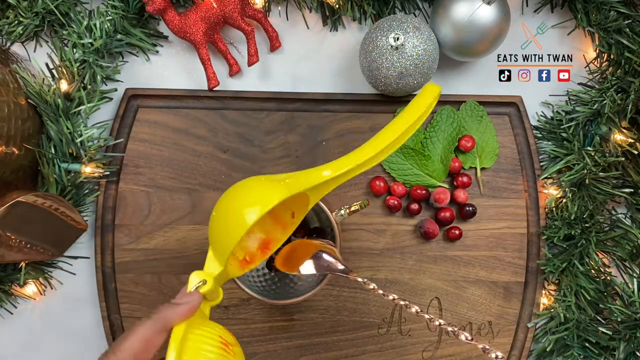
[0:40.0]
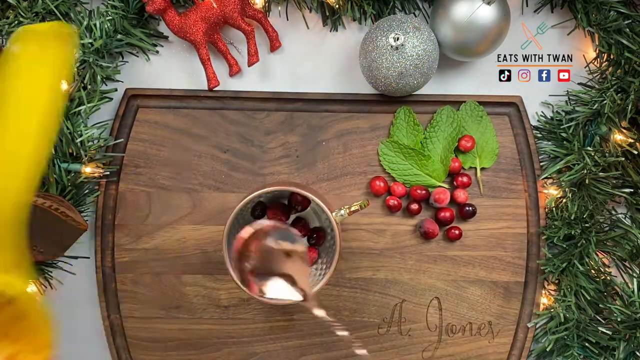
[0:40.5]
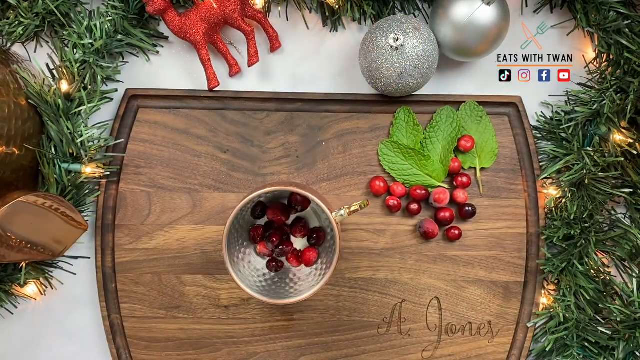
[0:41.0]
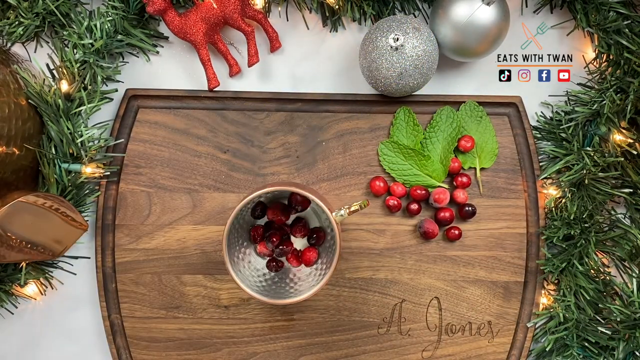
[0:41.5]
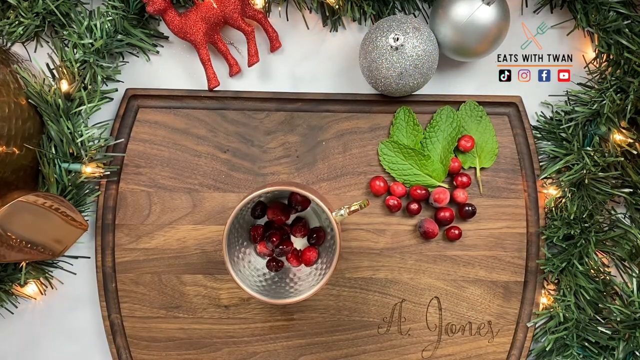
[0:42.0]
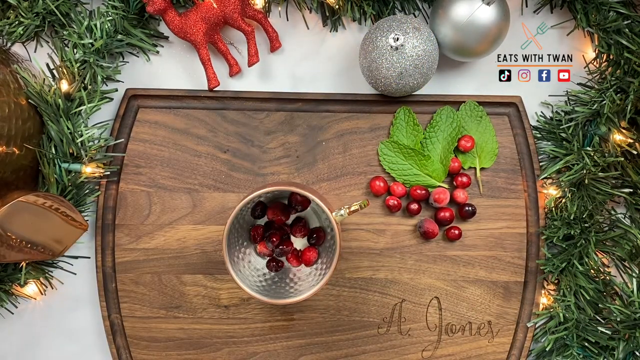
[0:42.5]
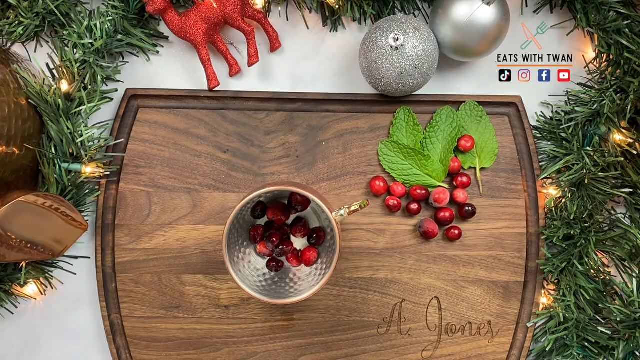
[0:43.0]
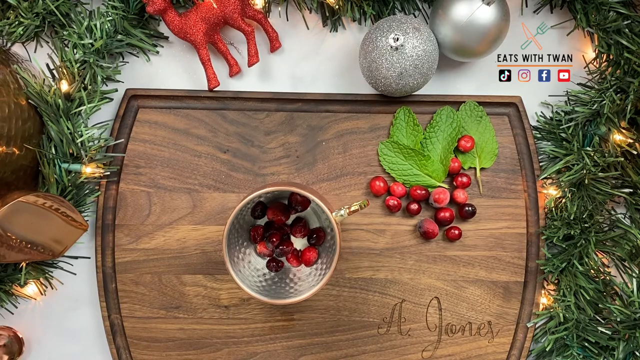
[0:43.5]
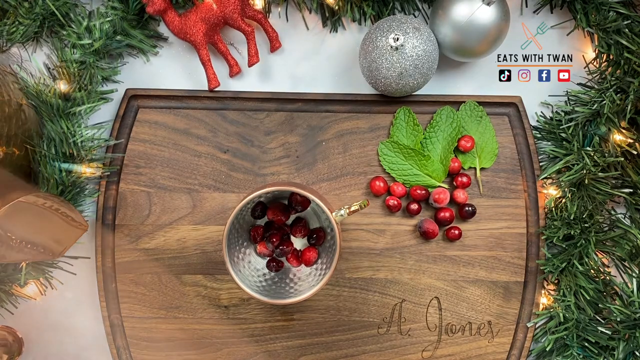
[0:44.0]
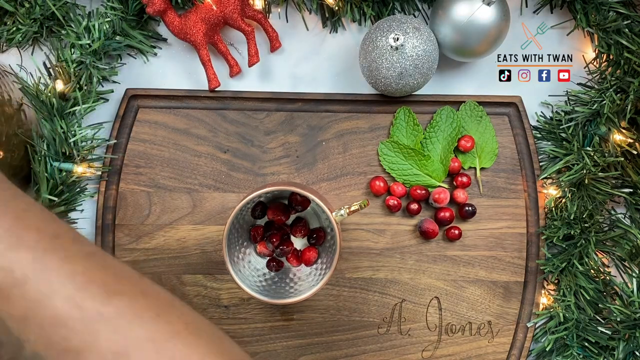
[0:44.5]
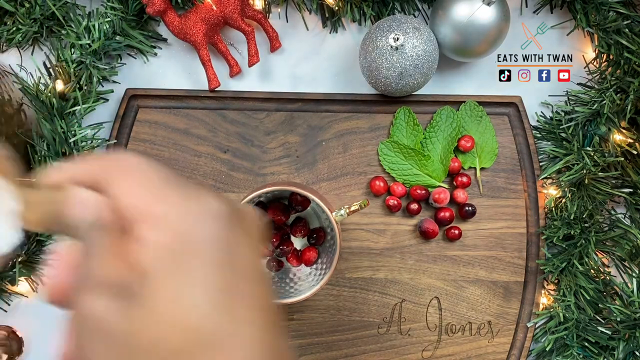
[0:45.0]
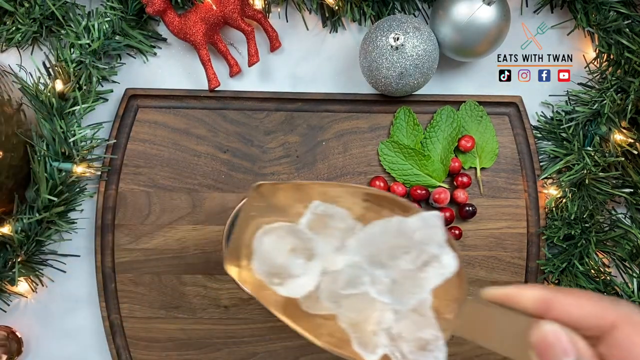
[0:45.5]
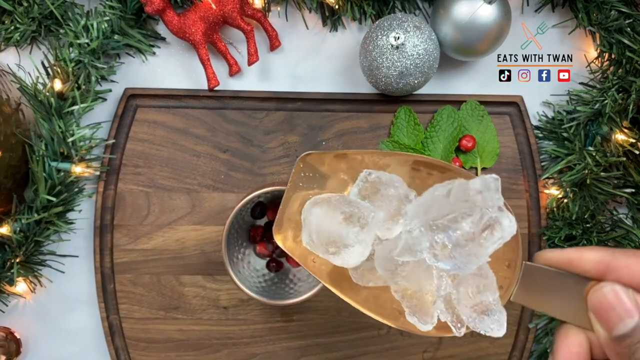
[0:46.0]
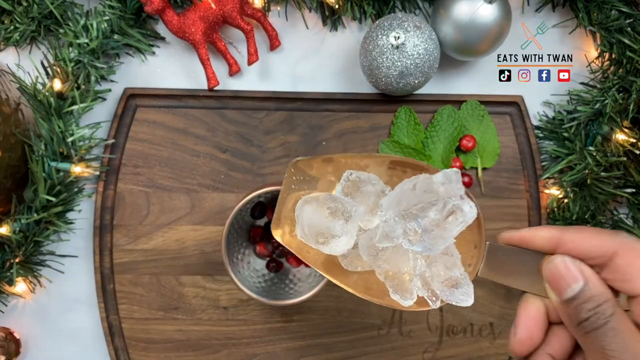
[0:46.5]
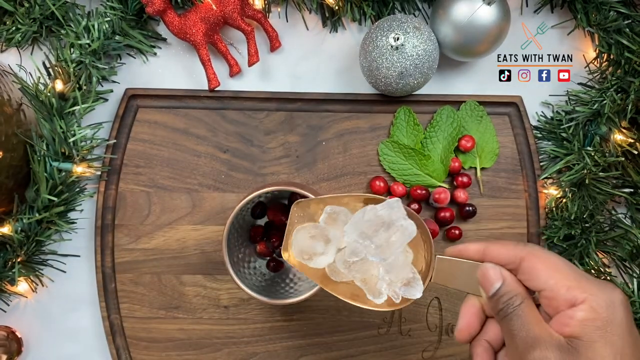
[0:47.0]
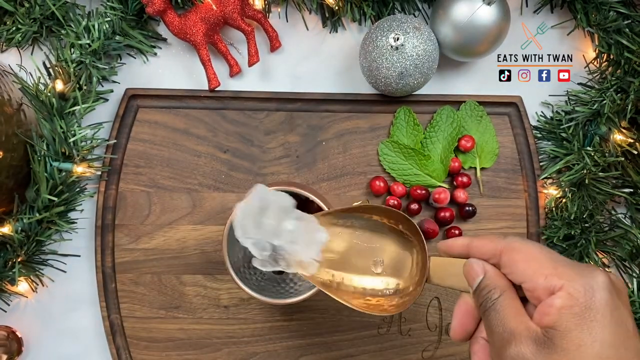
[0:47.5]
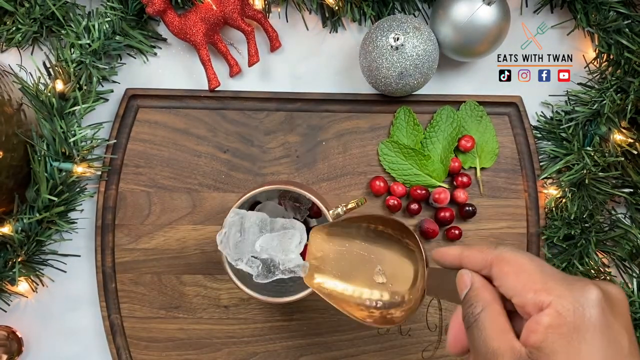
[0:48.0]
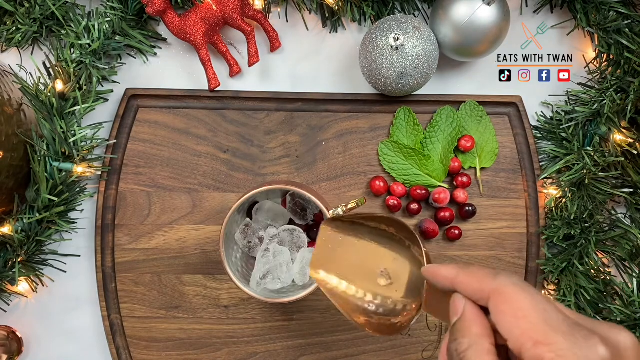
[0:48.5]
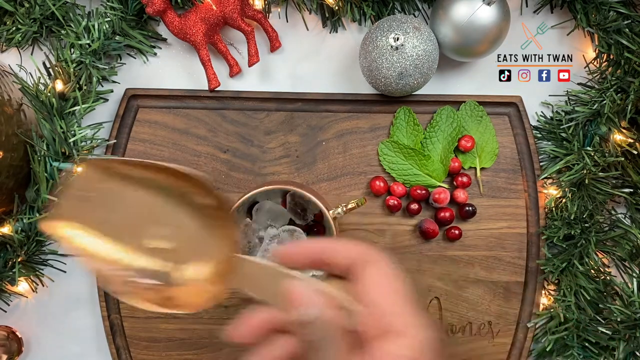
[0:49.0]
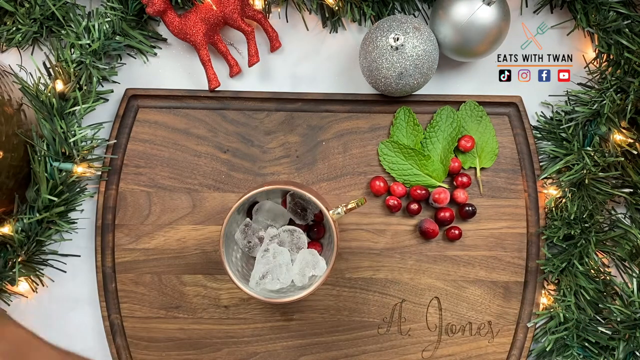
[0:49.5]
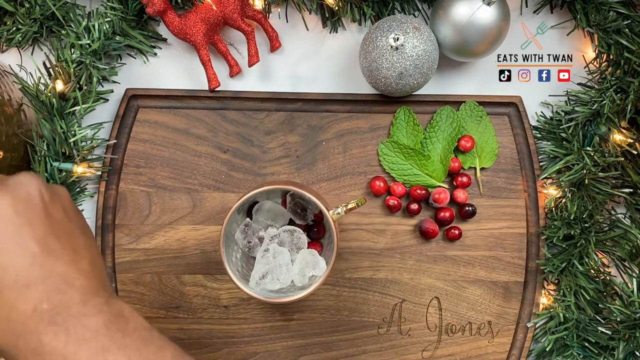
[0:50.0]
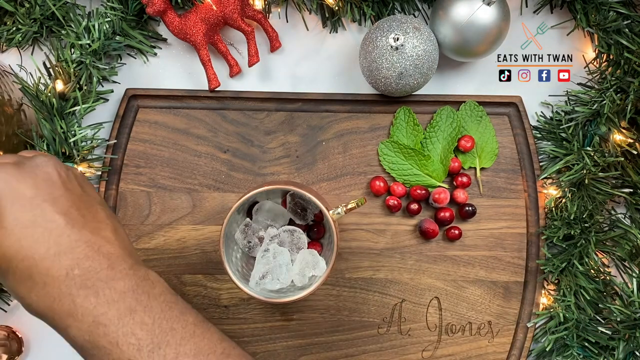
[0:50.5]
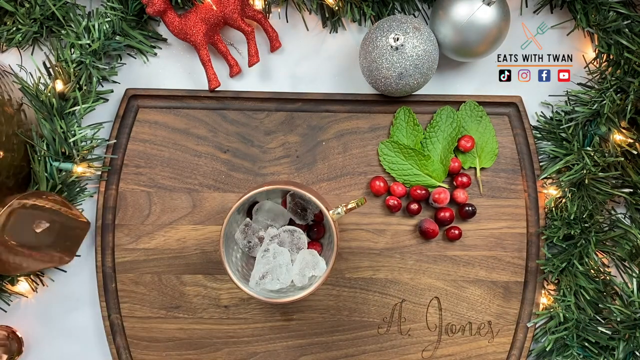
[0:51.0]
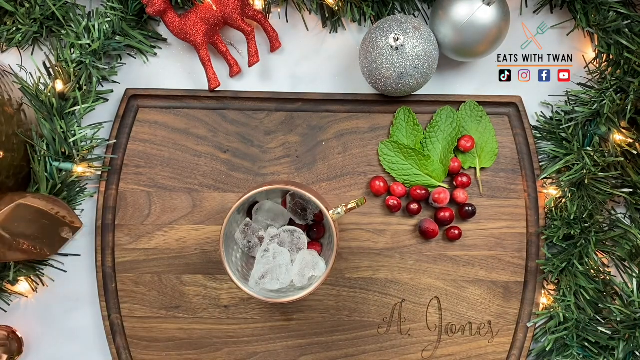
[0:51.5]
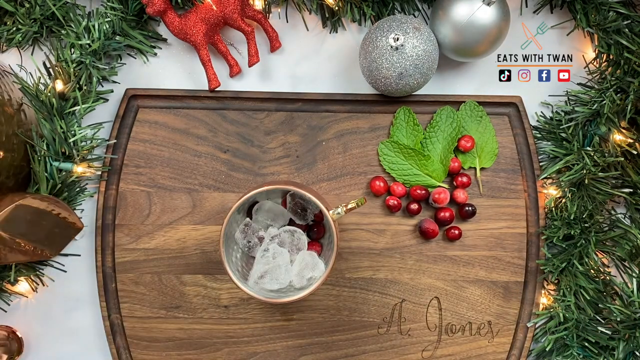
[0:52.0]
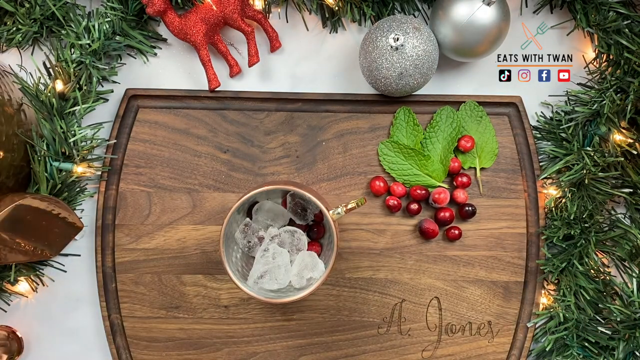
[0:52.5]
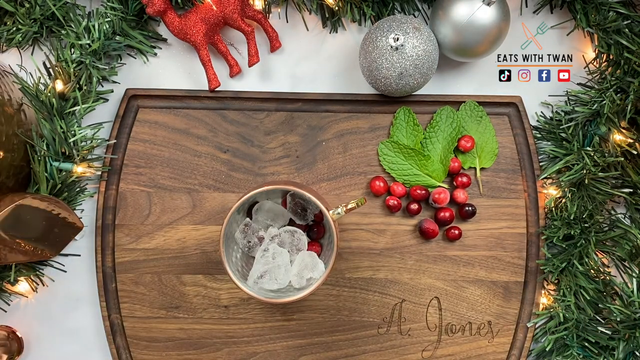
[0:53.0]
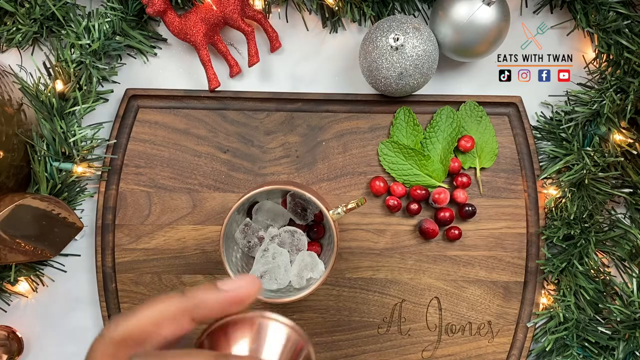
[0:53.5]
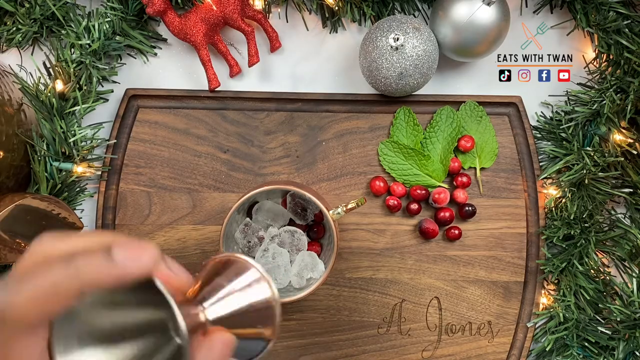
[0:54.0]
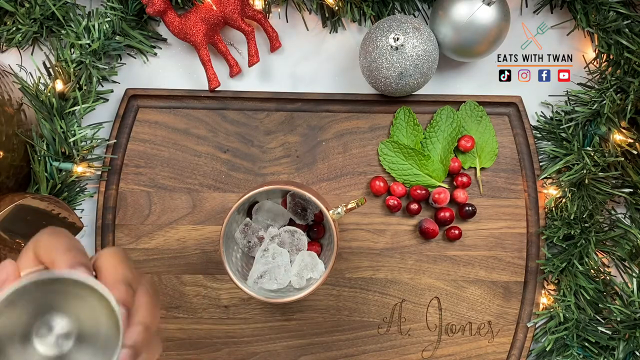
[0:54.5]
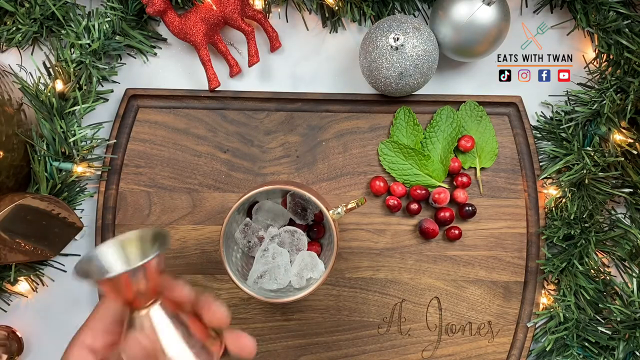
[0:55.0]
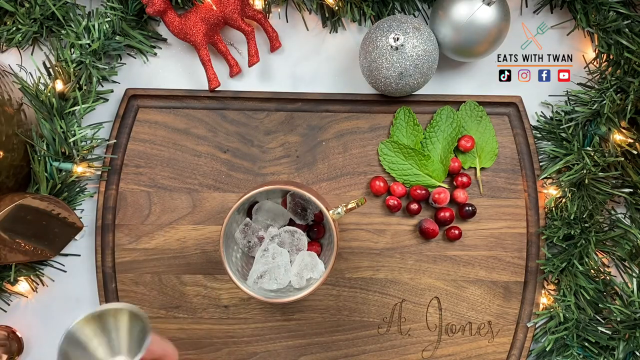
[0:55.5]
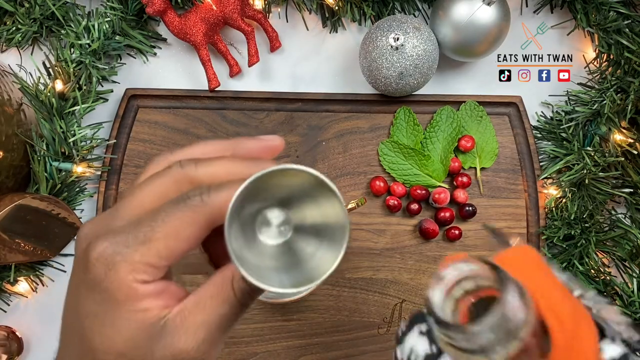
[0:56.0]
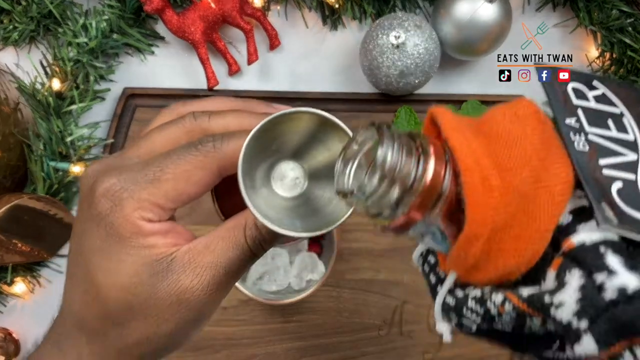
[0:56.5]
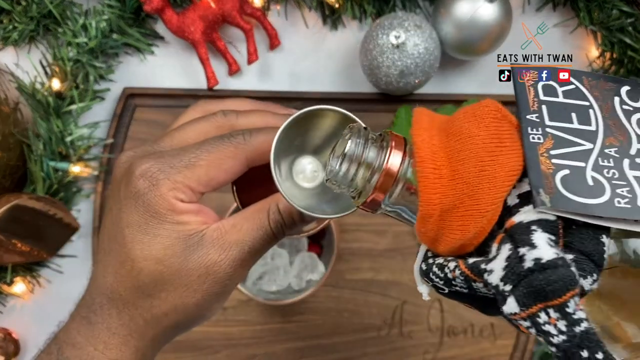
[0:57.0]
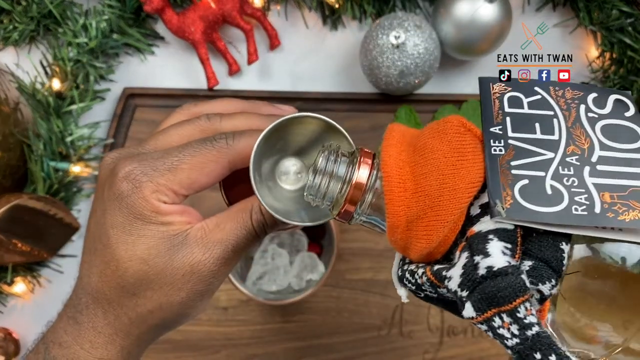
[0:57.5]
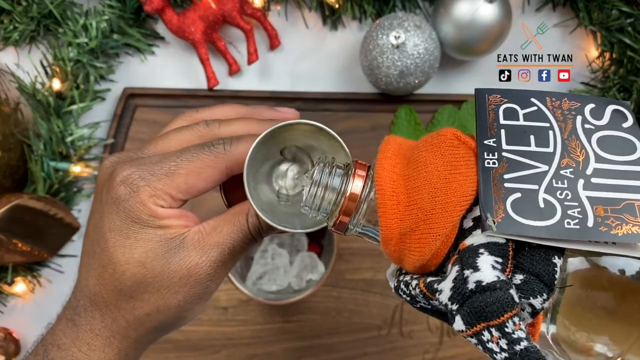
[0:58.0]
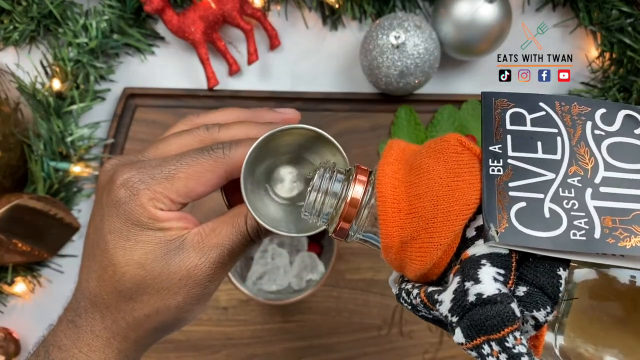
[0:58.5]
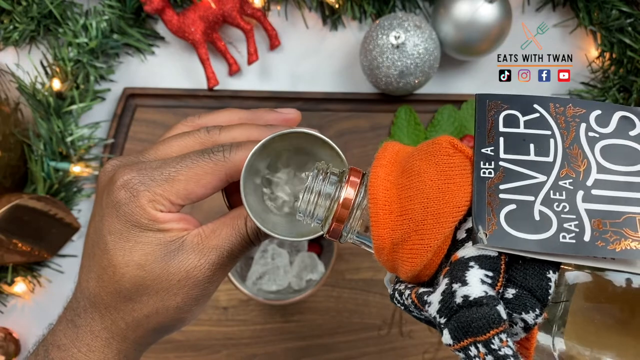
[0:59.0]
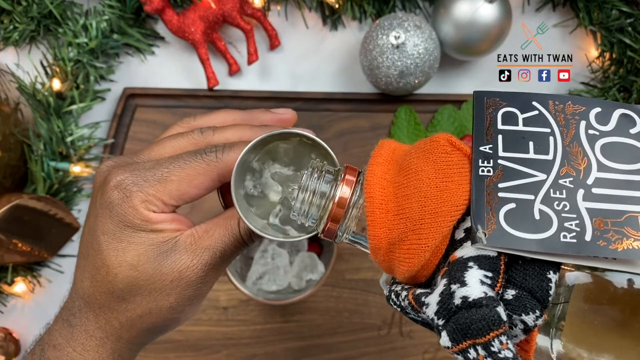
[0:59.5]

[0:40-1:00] From the top view of the cutting board, he uses a spoon to scoop squeezed pomegranates out of a yellow squeezing tool into a cup on the cutting board, which now holds many squeezed pomegranates. He then uses a big spoon holding a couple of blocks of ice and pours the ice into the cup. Next, he holds another small cup and pours into it a clear drink that looks alcoholic, coming from what looks like an alcoholic glass bottle, pouring it up close to the camera. The wooden cutting board has Christmas decorations around its edge, with silver Christmas tree ornaments and a red deer ornament.